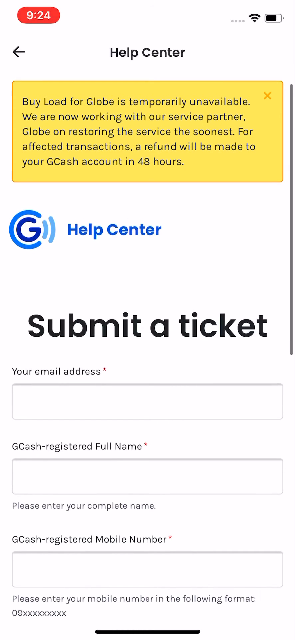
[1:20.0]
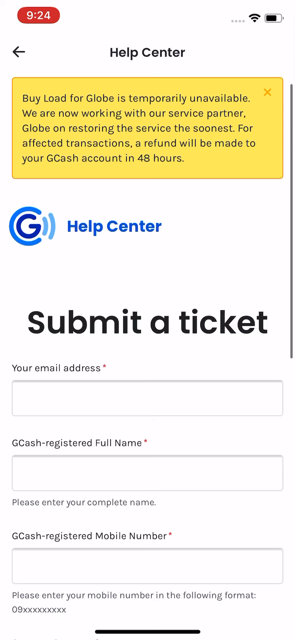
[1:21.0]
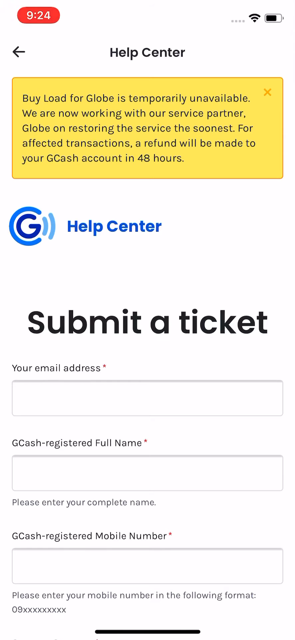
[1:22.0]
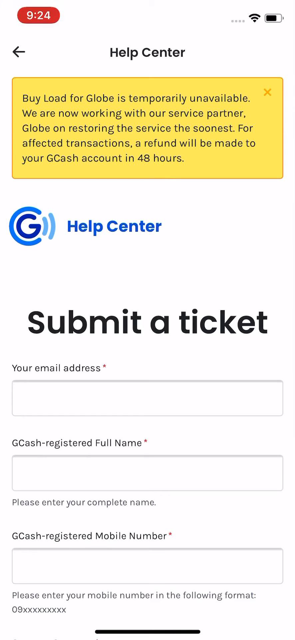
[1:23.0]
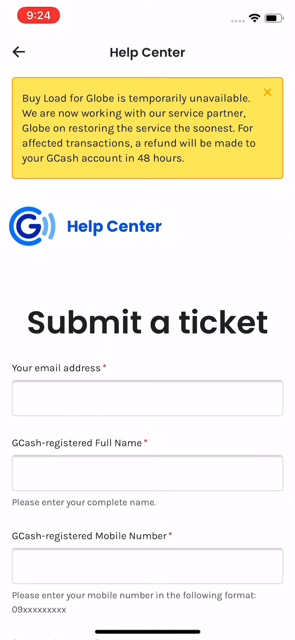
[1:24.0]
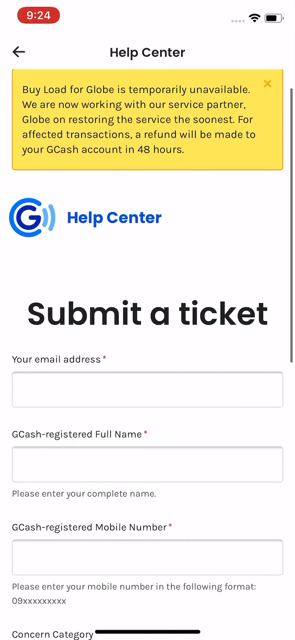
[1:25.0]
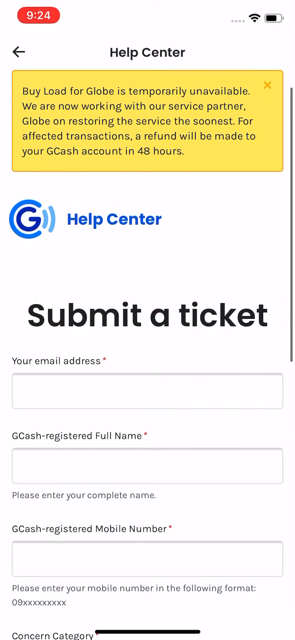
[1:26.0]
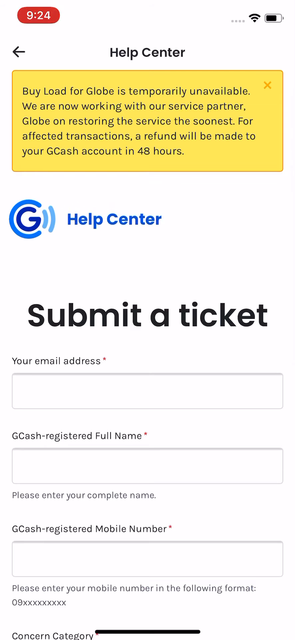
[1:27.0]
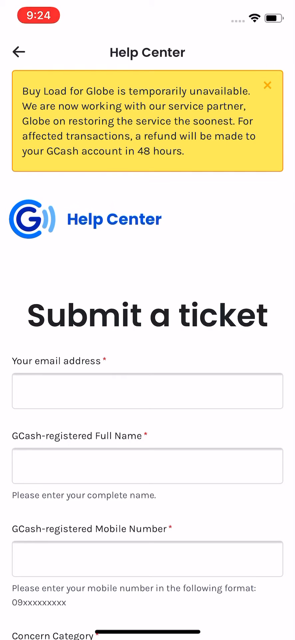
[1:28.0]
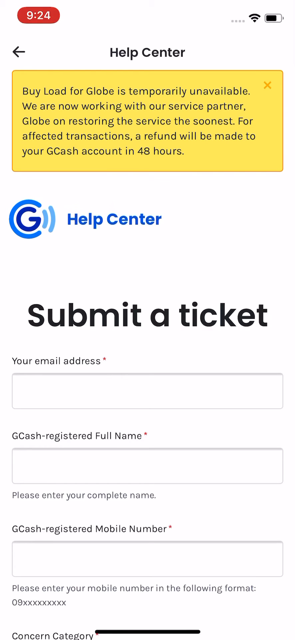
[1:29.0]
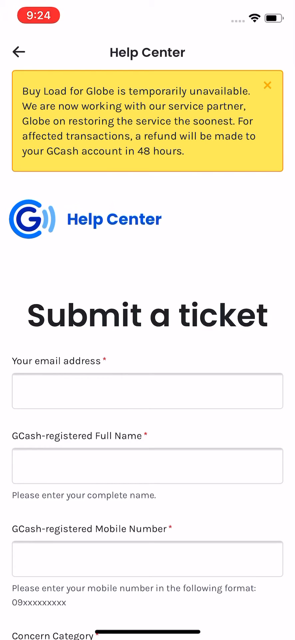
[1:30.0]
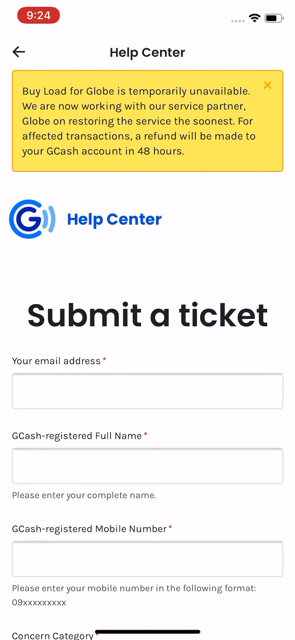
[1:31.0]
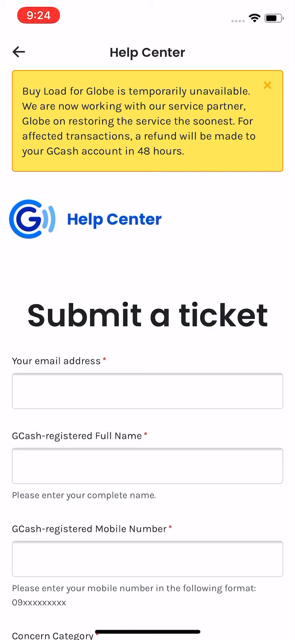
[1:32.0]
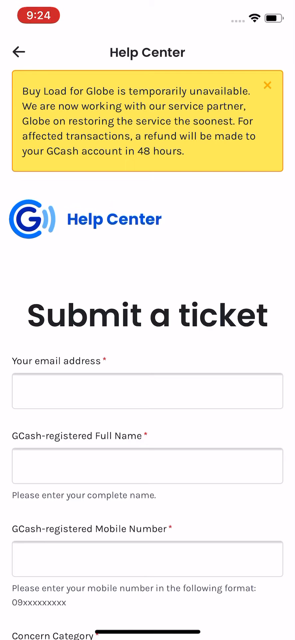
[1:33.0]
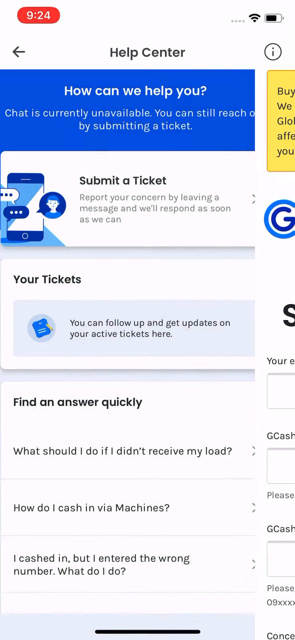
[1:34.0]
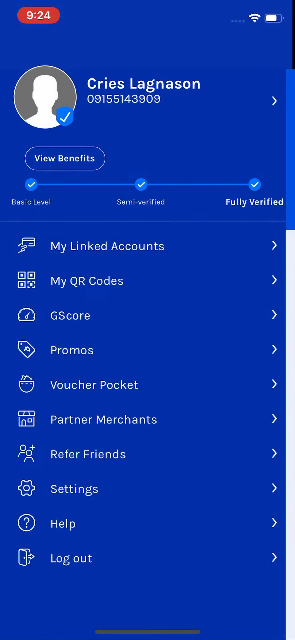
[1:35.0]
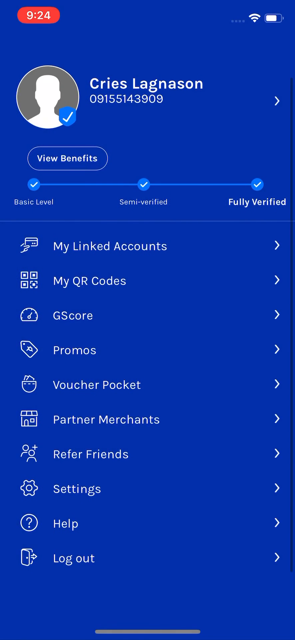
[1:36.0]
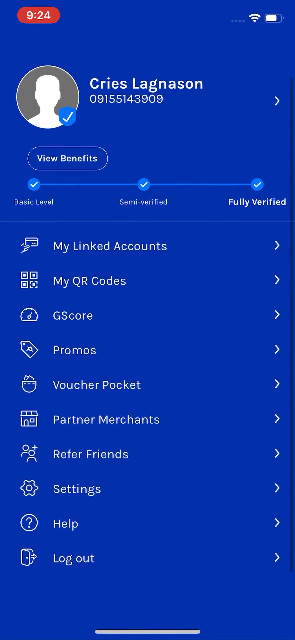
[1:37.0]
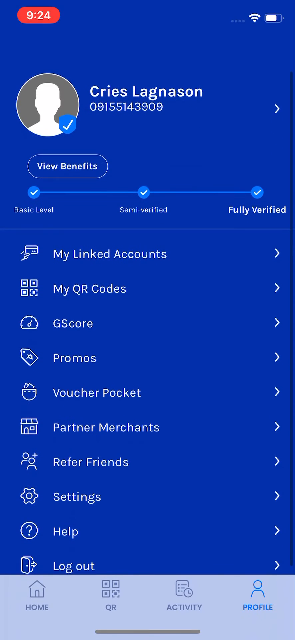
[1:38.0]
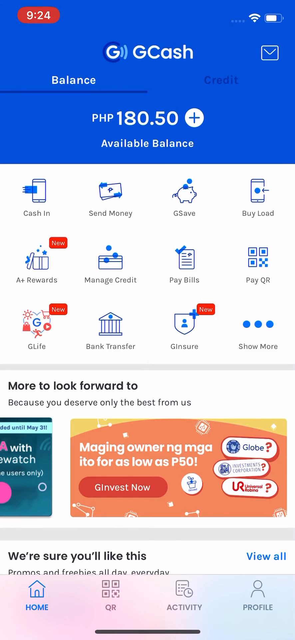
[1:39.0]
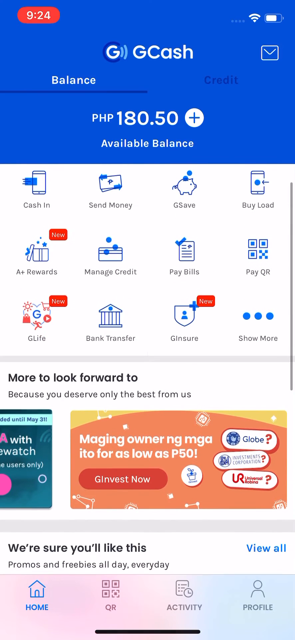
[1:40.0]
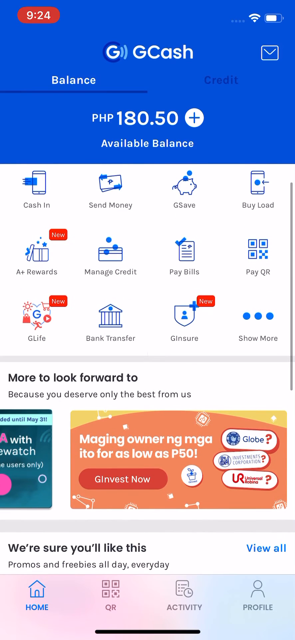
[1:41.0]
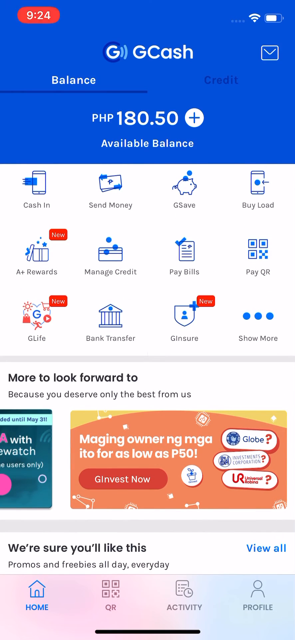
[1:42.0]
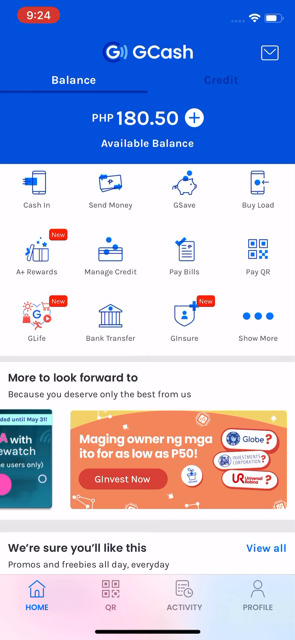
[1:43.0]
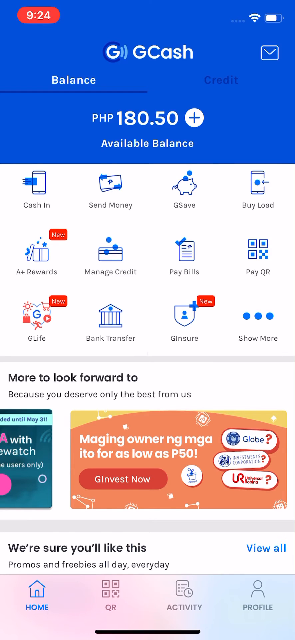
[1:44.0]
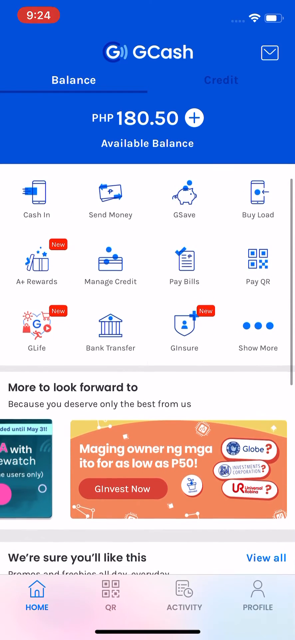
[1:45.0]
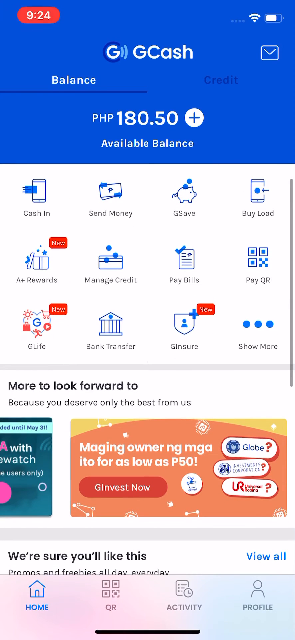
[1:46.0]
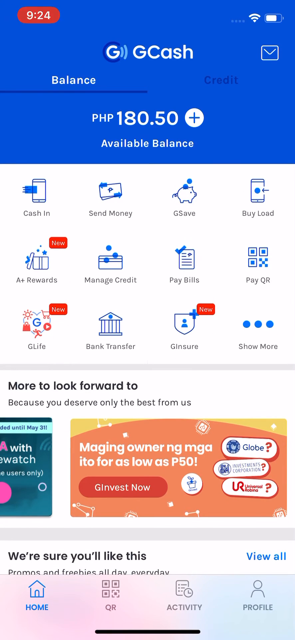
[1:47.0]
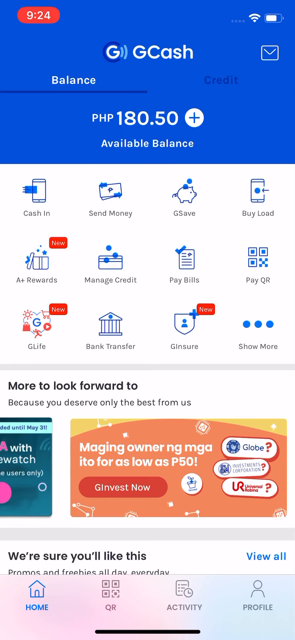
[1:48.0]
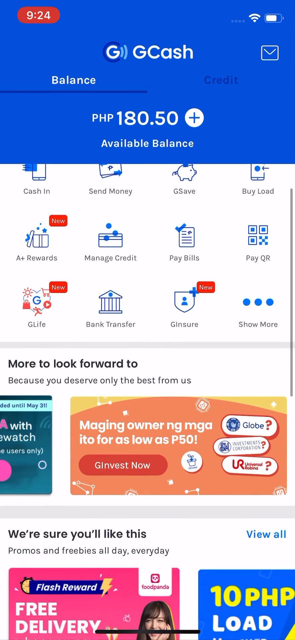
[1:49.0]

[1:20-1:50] The person is still on the submit a ticket page, scrolling down slightly without entering anything, and "concern category" is visible. They swipe to the left twice, back to the profile menu, and refresh the page by scrolling down. They then go back to the homepage with the 3x4 grid of options and scroll down a little. Below are several boxes, including a section that says "more to look forward to," with flashy advertisements that scroll left and right. The one currently shown is orange and says something like "as low as P50," with a red button whose text is hard to see but seems to say something like "Harvest Now." On the left side, part of another advertisement is visible in a turquoise color.